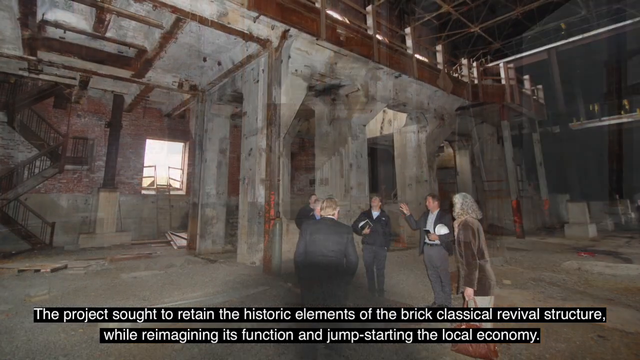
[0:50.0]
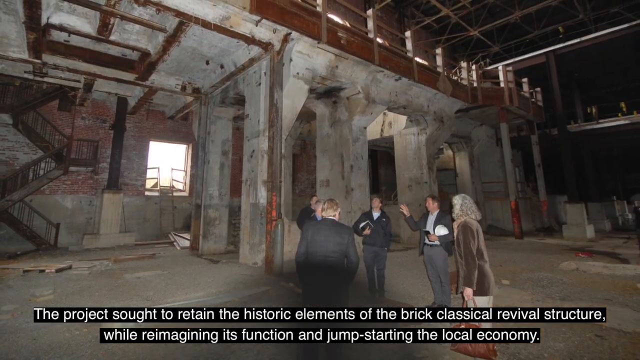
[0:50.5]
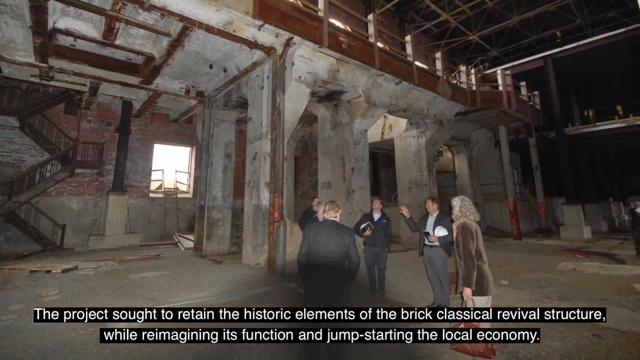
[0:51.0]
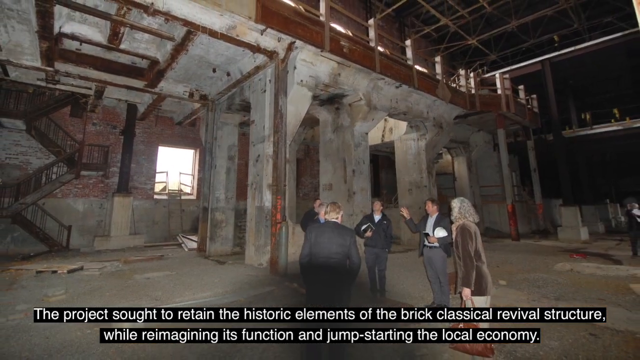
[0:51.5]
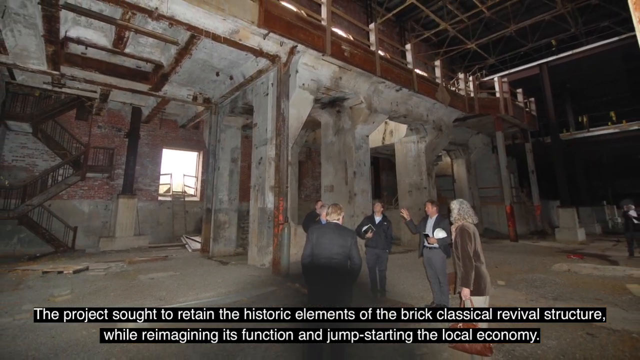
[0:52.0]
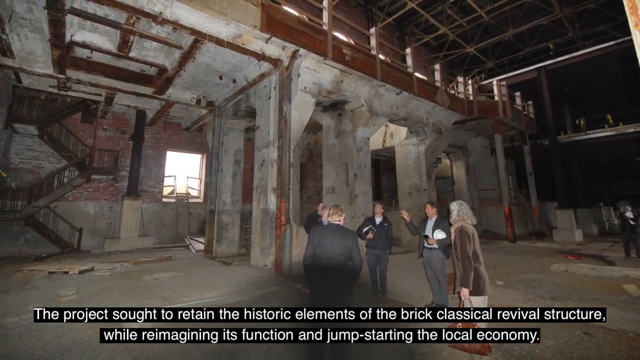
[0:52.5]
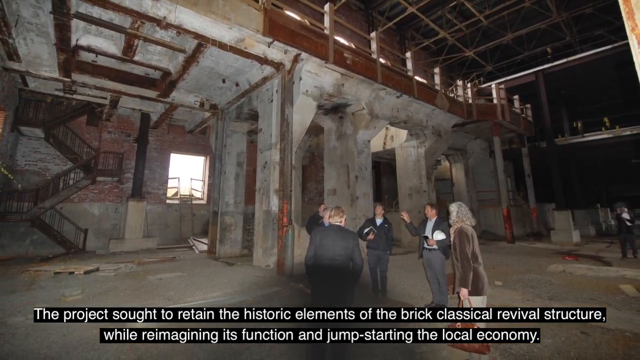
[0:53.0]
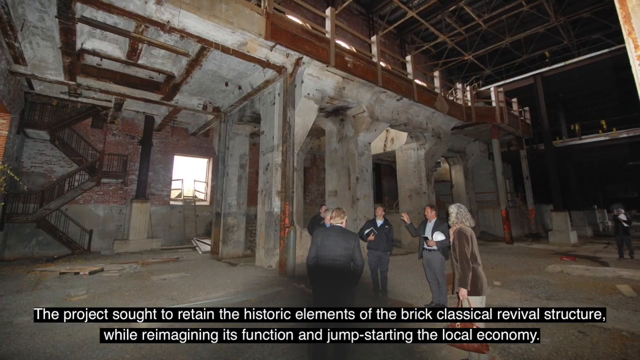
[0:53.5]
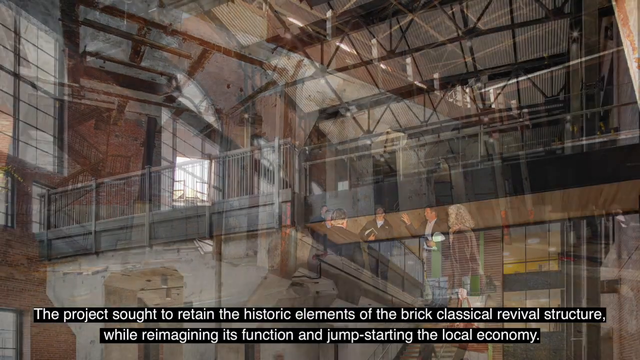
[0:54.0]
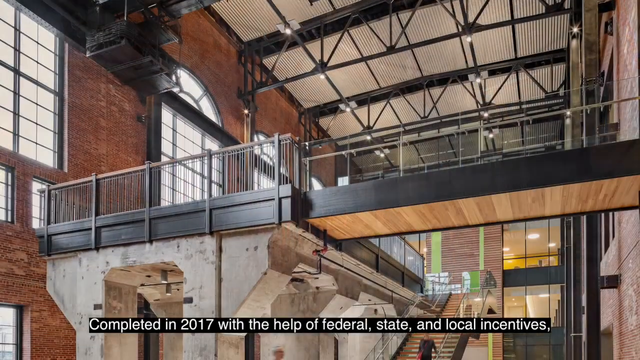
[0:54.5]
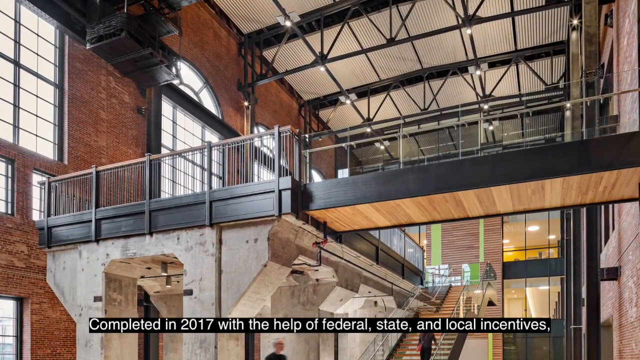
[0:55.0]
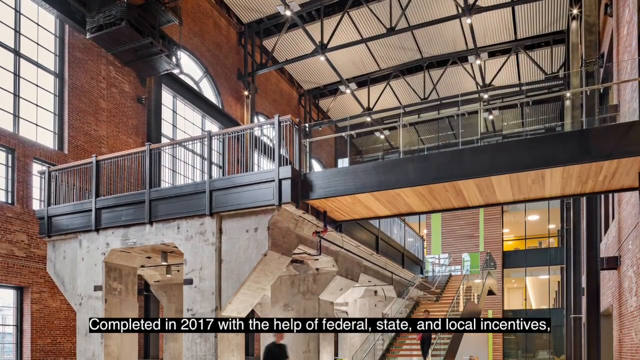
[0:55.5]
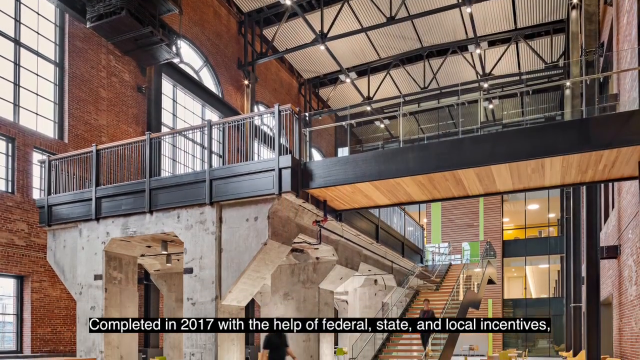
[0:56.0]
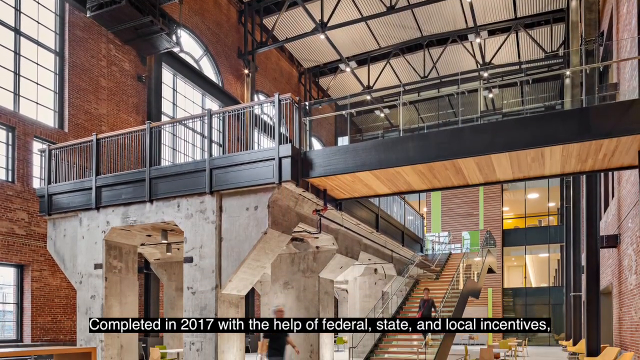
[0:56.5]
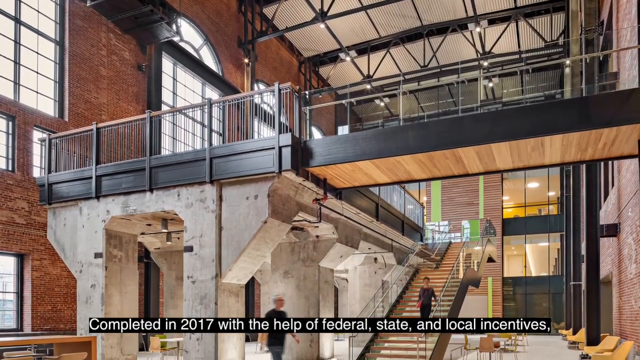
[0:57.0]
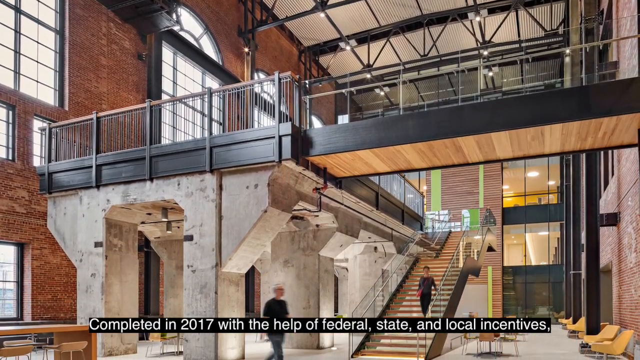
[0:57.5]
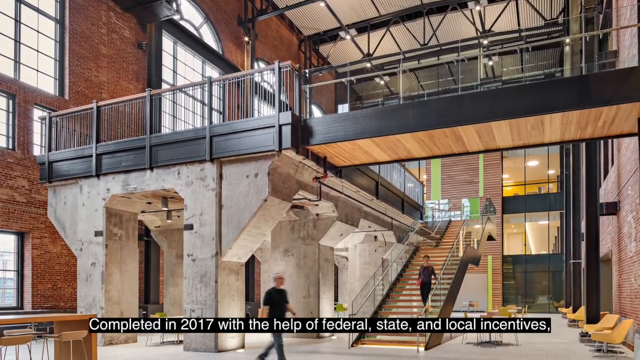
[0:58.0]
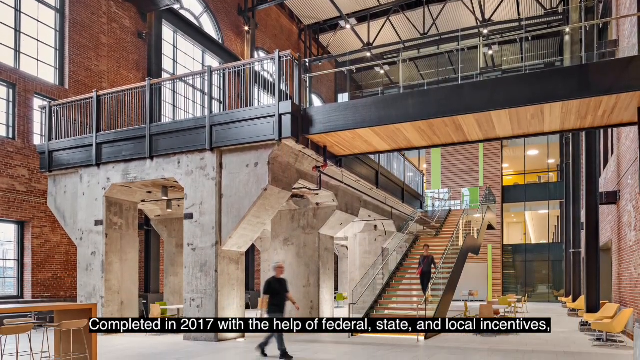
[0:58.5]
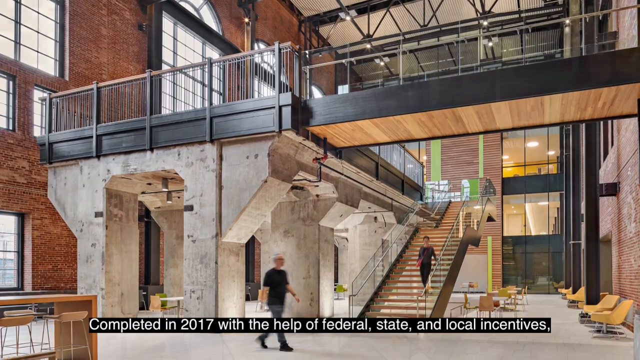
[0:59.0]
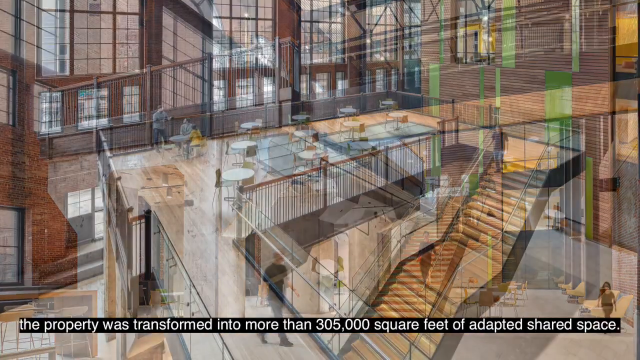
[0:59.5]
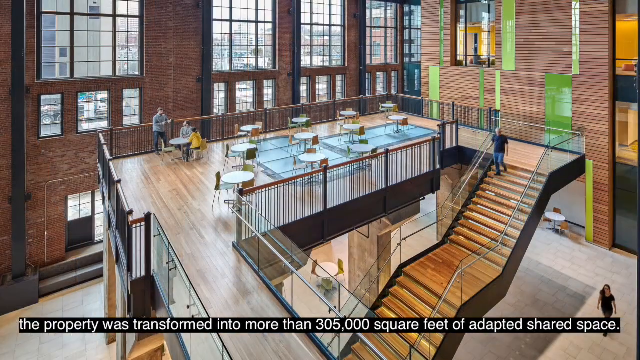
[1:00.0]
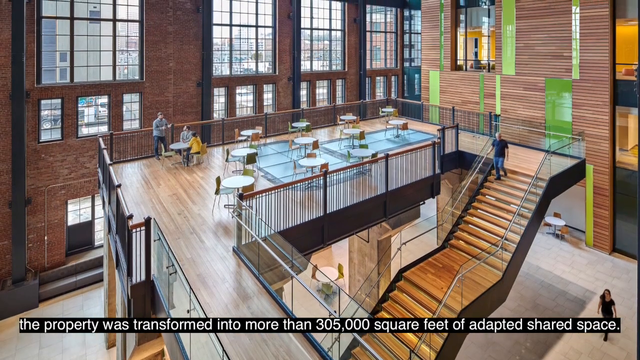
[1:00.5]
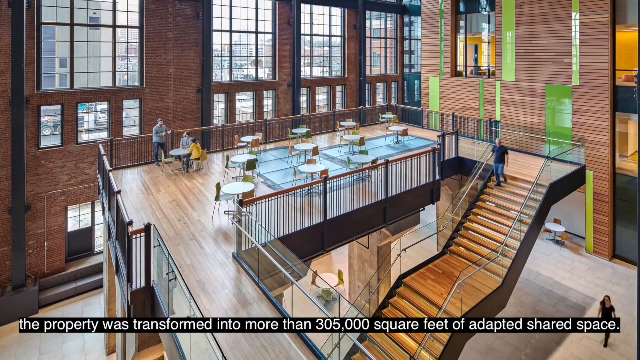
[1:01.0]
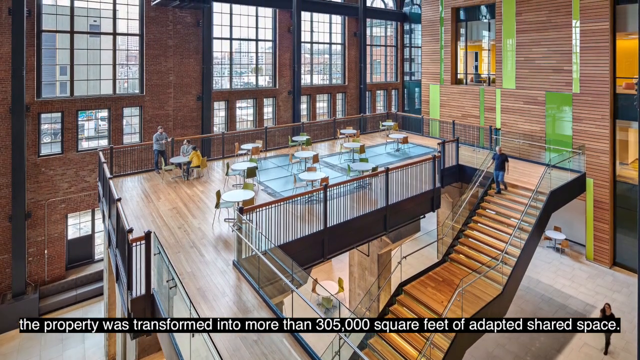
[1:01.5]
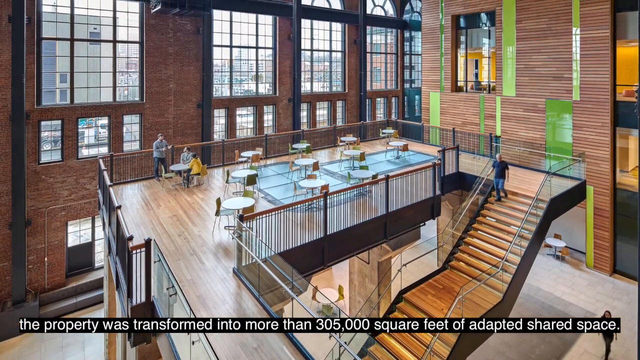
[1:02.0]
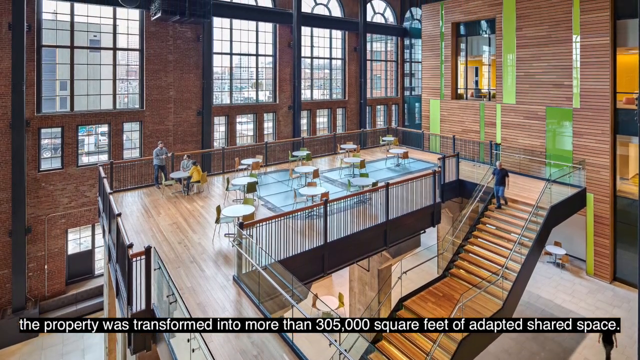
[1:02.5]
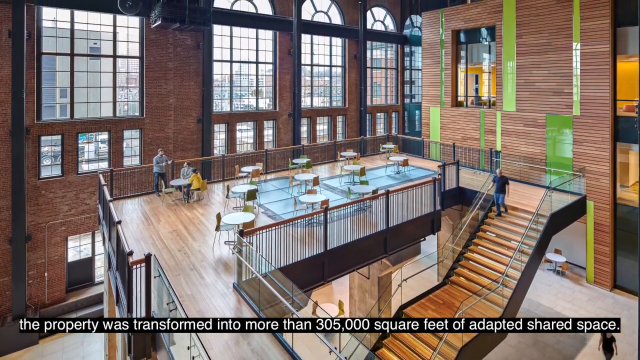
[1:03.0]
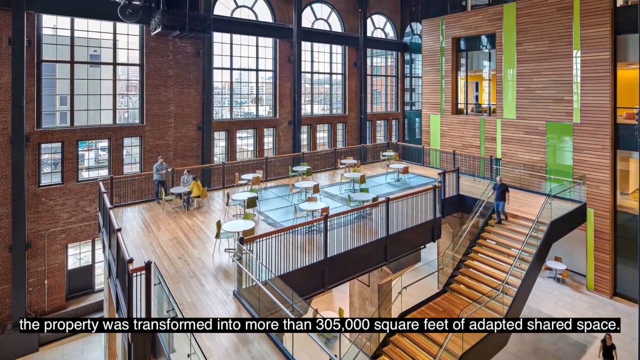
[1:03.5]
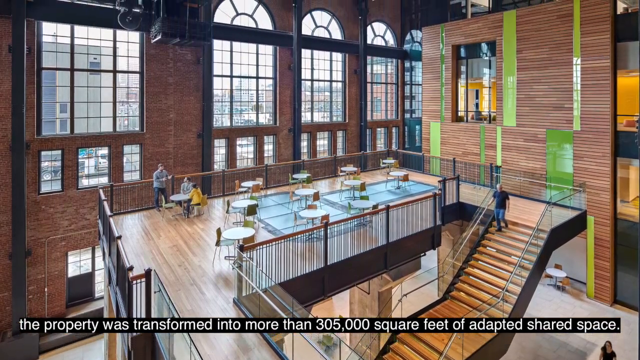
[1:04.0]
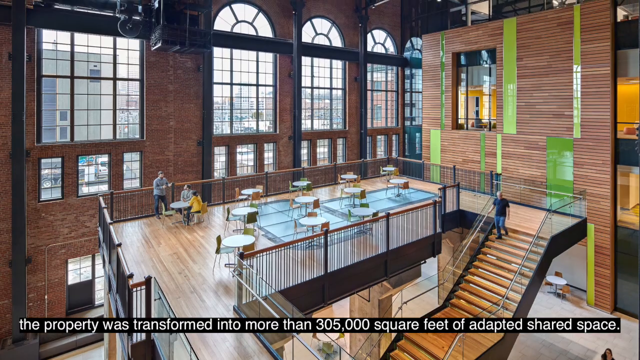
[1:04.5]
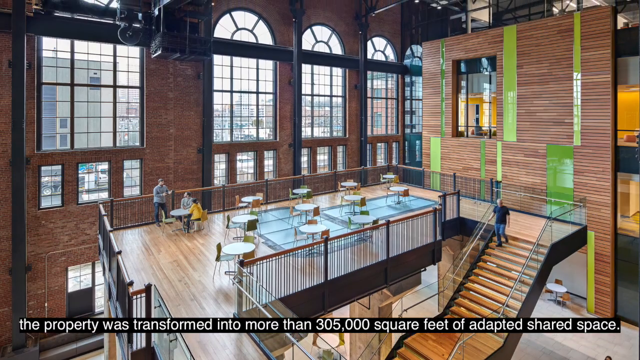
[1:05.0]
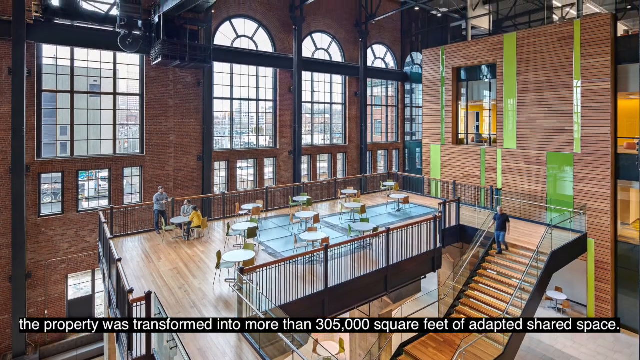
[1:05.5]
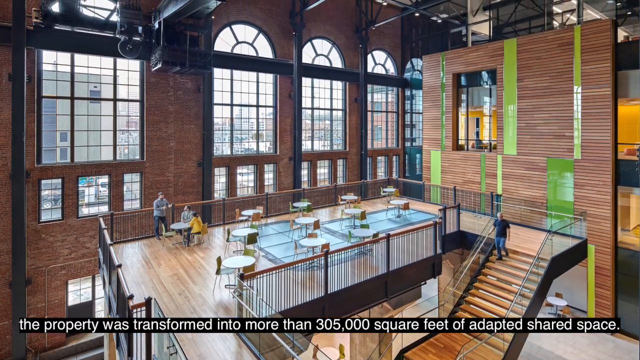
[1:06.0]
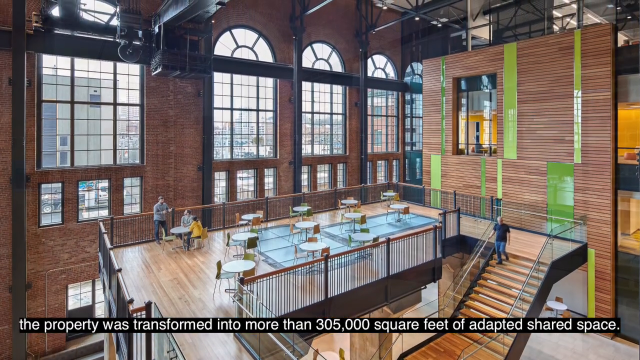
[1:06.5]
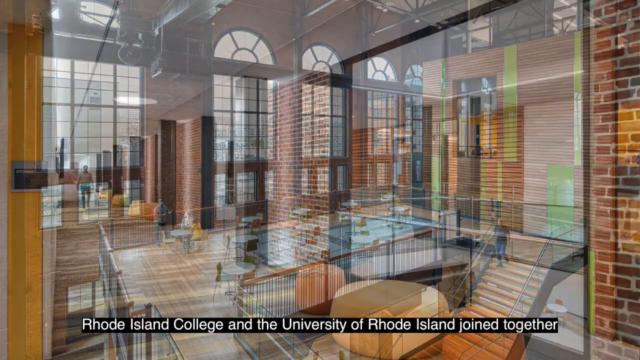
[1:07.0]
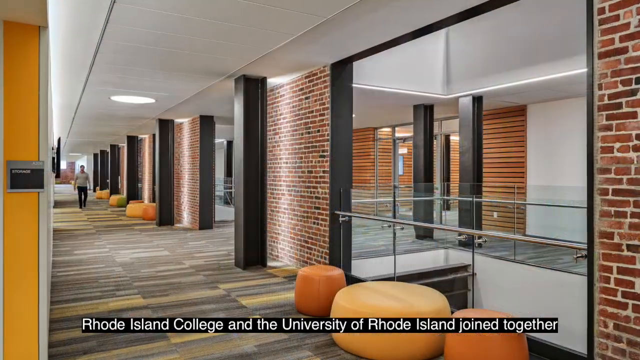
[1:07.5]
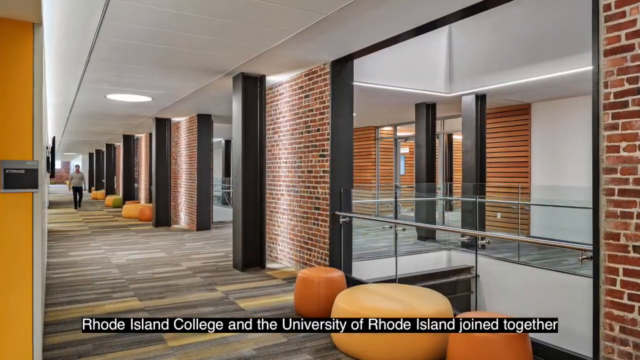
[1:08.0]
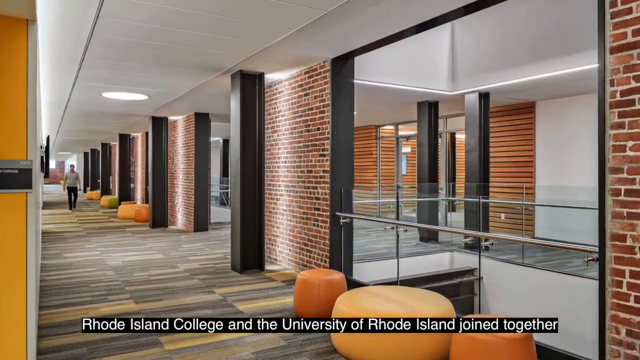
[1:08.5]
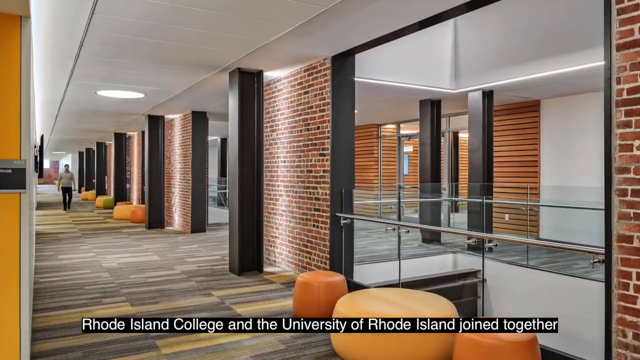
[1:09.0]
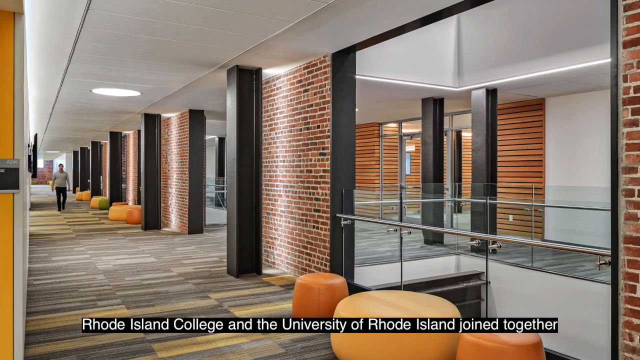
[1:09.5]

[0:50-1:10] A group of five people stands inside an unfinished building. A staircase with a zigzag pattern is in the back left corner. Much of the framing is concrete, and the building is very high up. The next image is a more completed shot of the inside of the building. The camera moves downwards as a person walks down a flight of stairs; up above are the fence and railing for the upper floor. Much of the inside wall foundation is brick, and the ceiling is black metal and piping. Text reads "completed in 2017 with the help of federal, state, and local incentives." The next image shows the upper floor, with some seats. What looks like one person is walking down the stairs, with their right hand on the railing, their right foot on the second stair and their left foot on the first stair. A group of three people is around a table in the background. The camera continues to move up towards the ceiling of the building. The next image shows another floor of the building, with finished laminate-style flooring and gray ceilings.